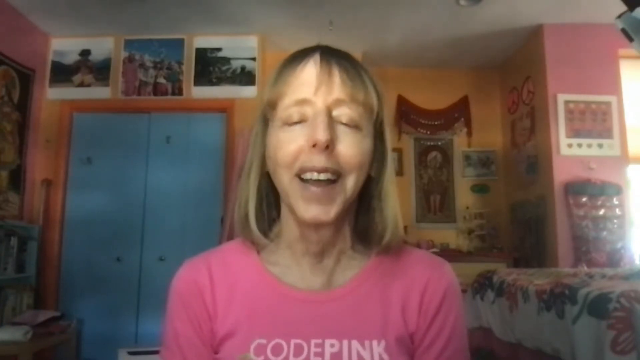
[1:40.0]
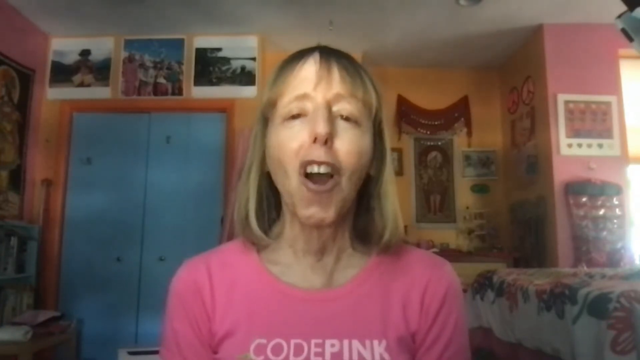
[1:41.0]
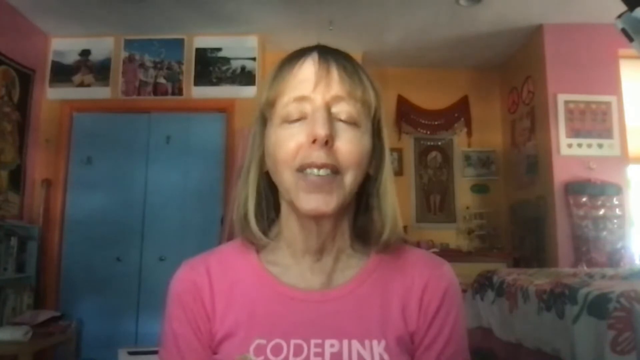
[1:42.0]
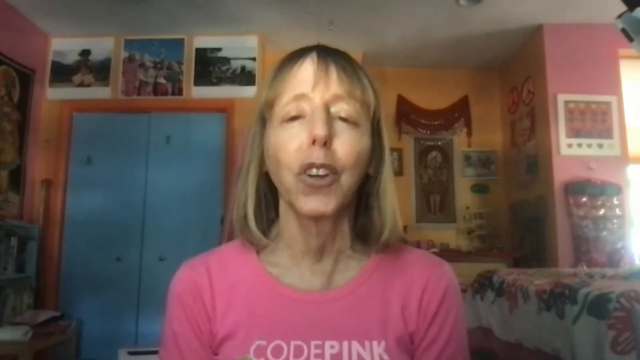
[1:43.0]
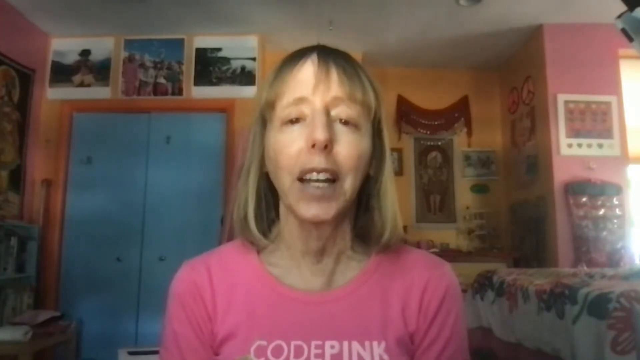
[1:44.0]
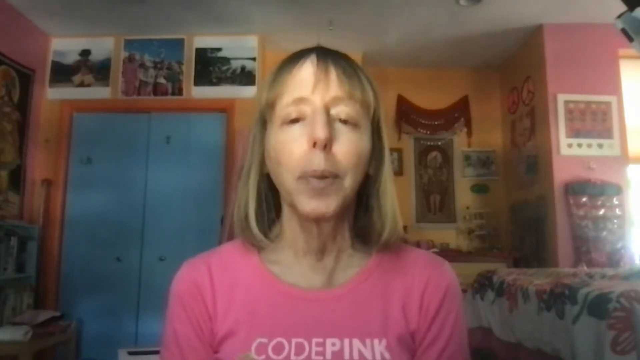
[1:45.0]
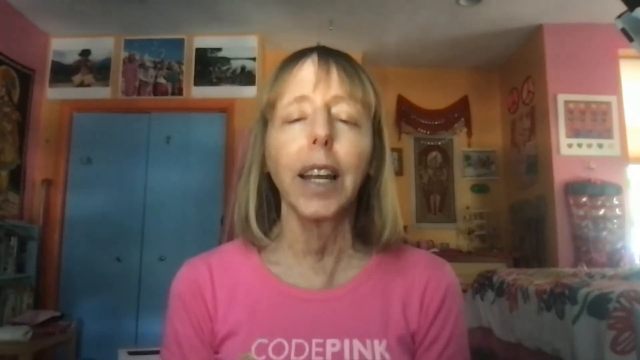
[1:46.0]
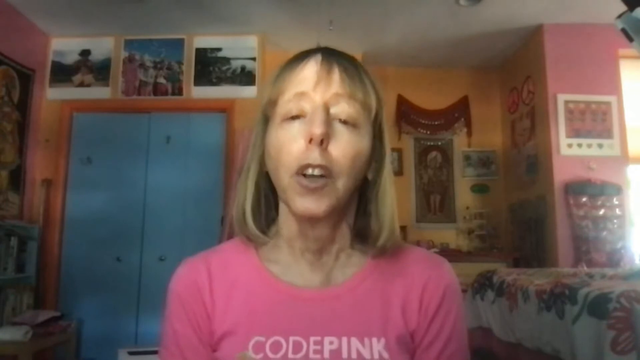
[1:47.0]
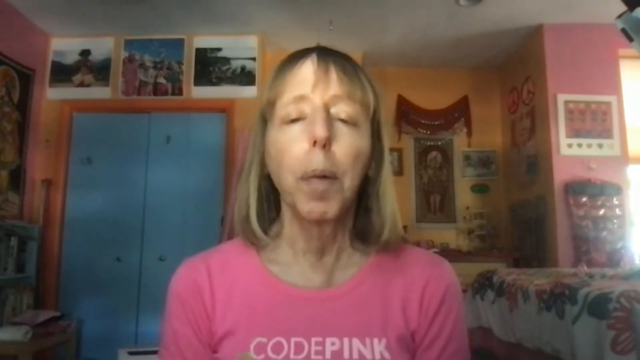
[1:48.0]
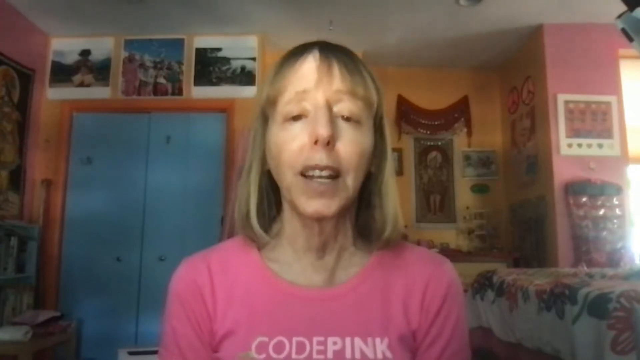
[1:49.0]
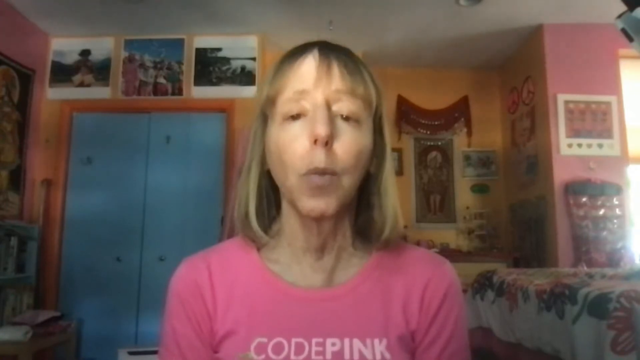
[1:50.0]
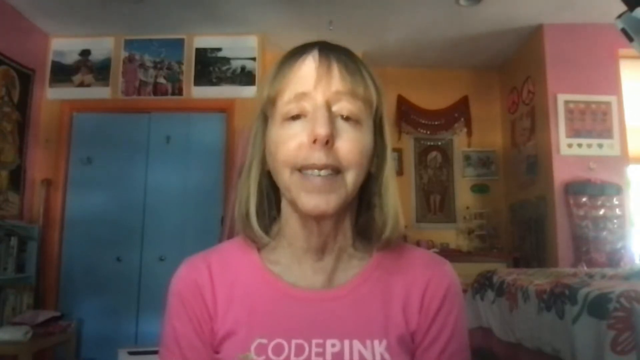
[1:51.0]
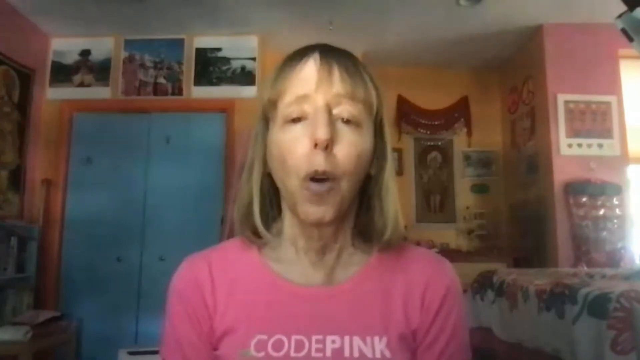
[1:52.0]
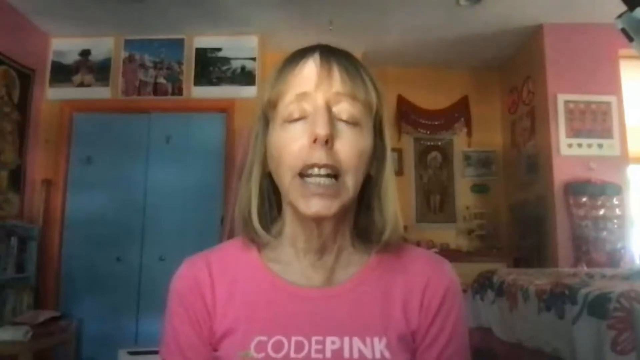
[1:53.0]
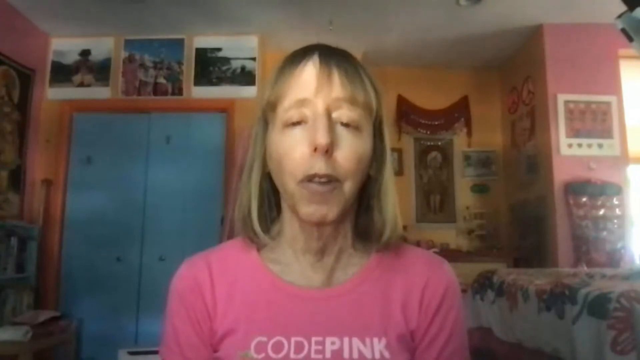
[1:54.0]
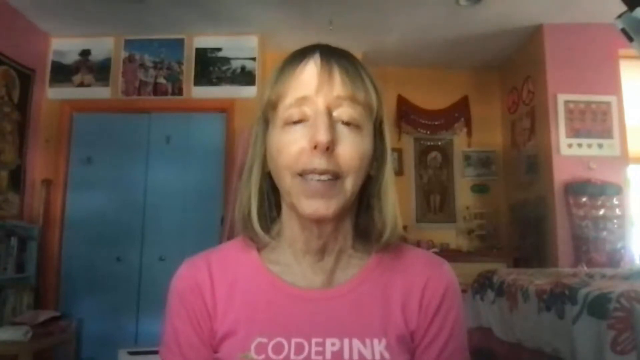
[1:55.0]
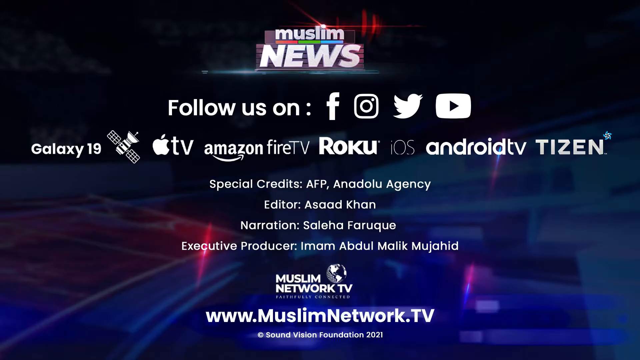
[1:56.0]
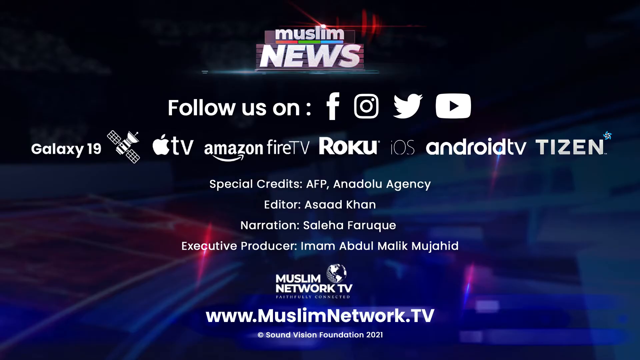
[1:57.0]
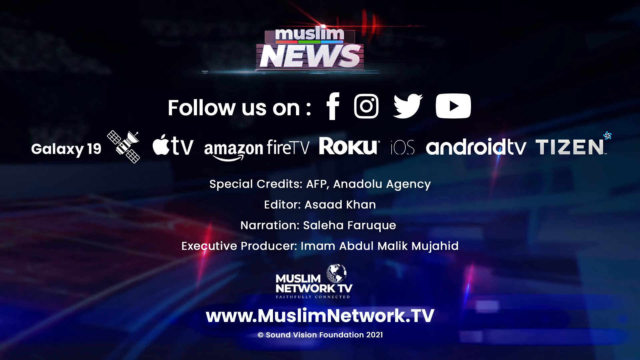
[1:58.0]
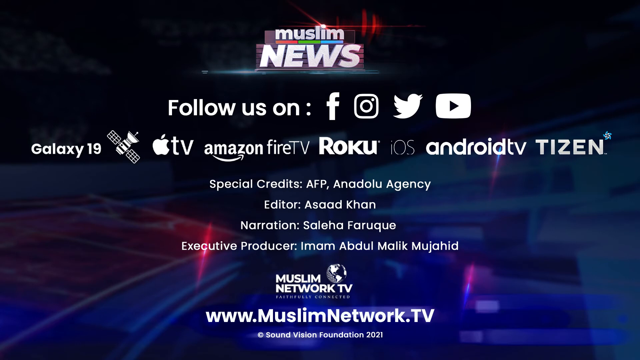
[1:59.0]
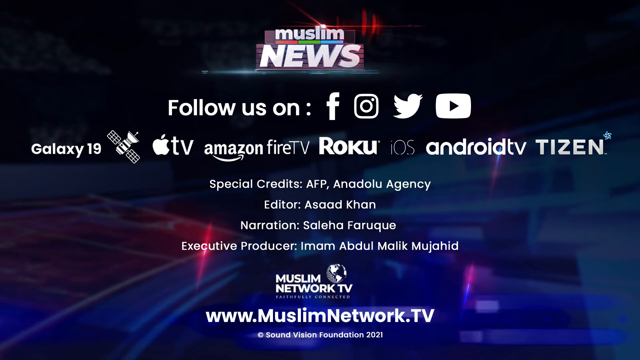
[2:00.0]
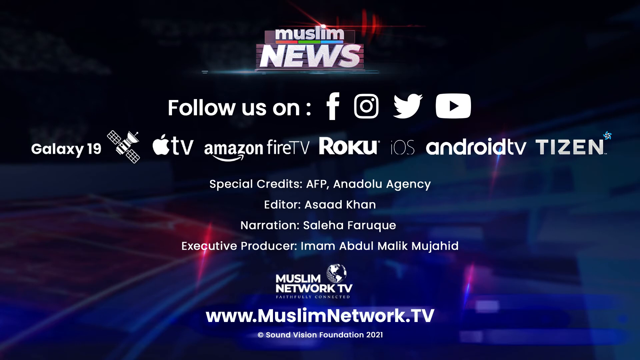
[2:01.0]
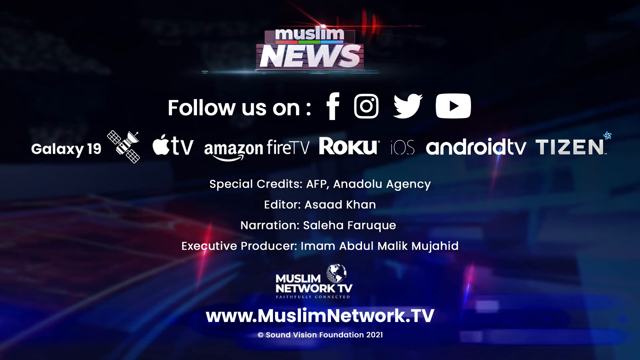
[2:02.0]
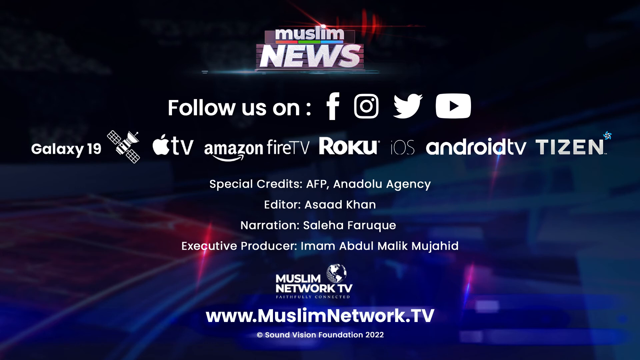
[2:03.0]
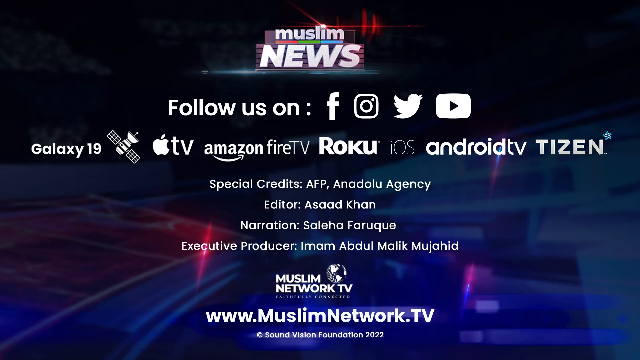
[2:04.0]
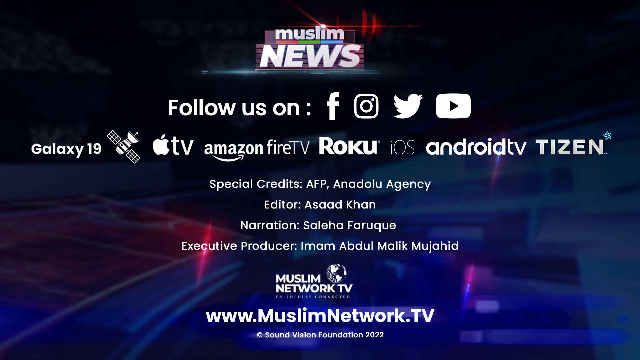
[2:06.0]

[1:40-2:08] The American activist with short blonde hair stands in what seems to be her apartment, with many pictures on the wall, speaking fervently into the camera. She wears a pink blouse with a sort of scoop neck, and behind her is a set of doors painted blue. The dominant colors are blue, gold, red, pink and white, and the lighting is dim, making some details of the room hard to make out. The video ends with text identifying the source as the Muslim news and giving numerous credits.